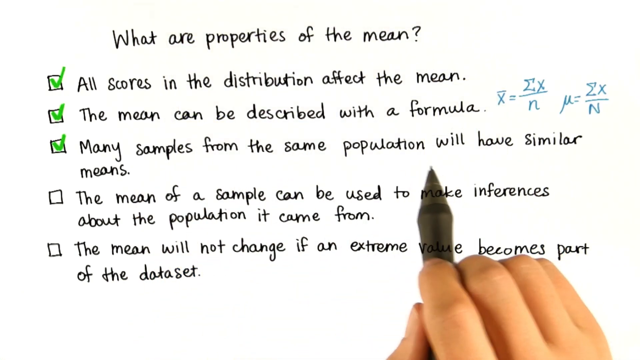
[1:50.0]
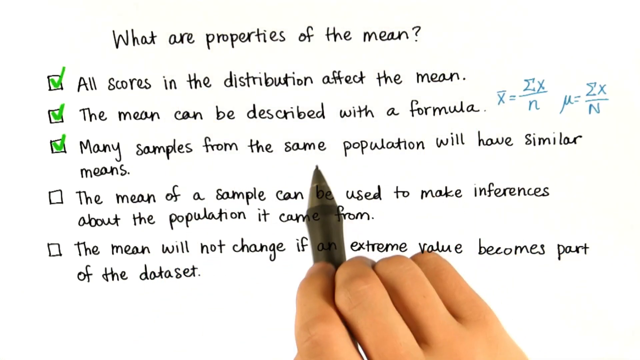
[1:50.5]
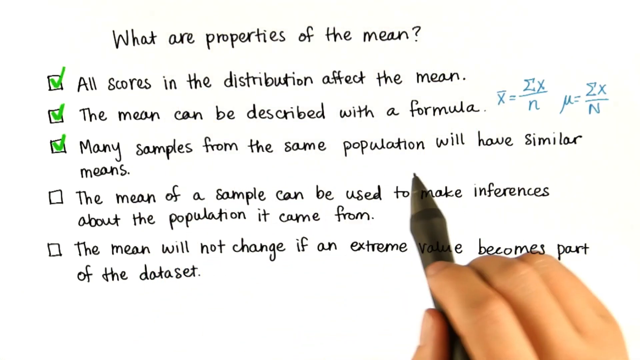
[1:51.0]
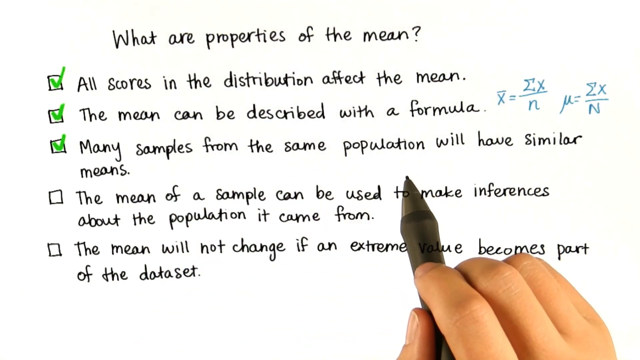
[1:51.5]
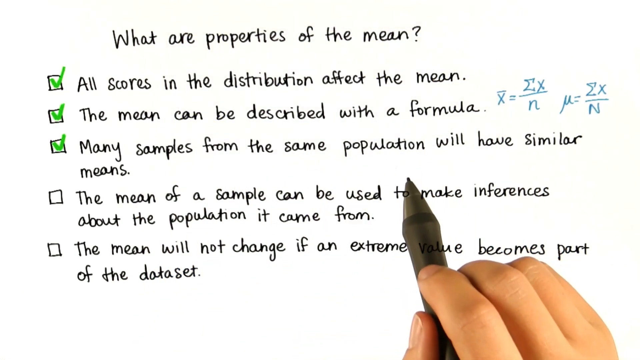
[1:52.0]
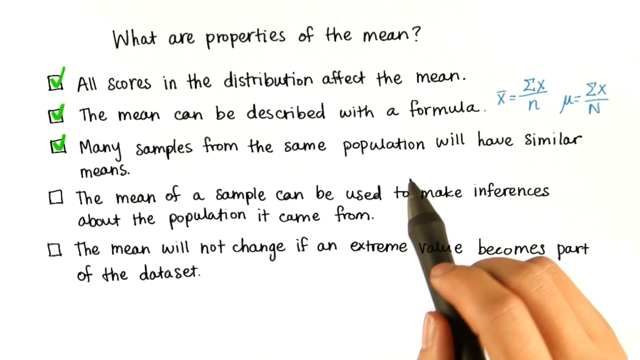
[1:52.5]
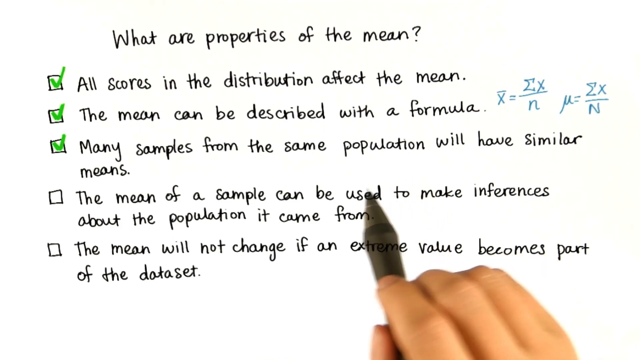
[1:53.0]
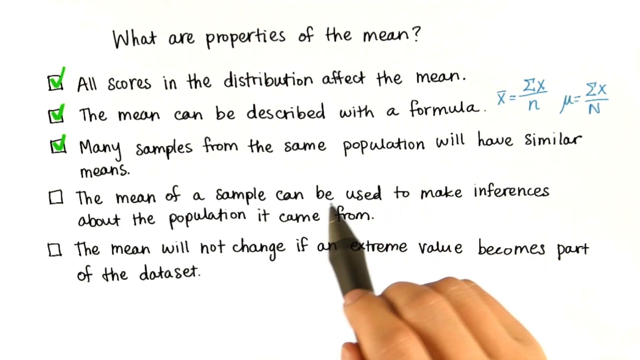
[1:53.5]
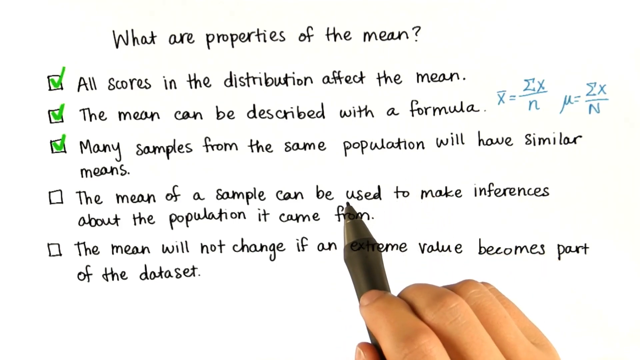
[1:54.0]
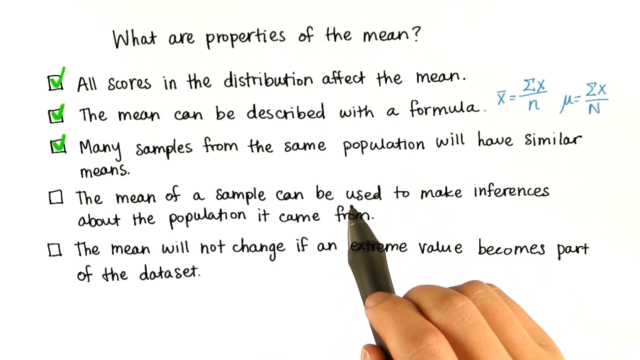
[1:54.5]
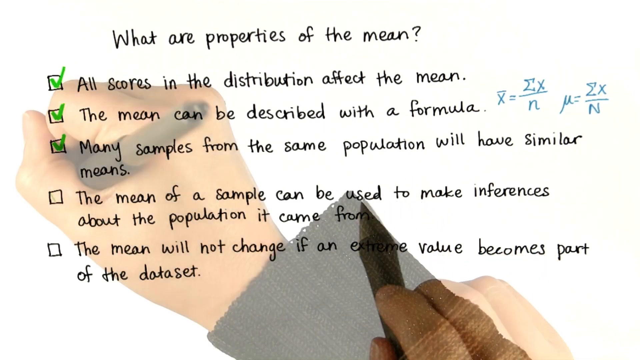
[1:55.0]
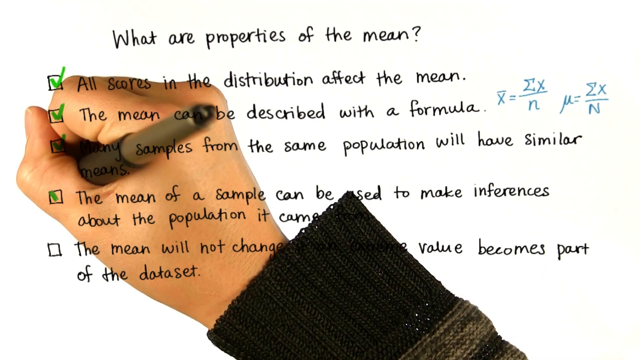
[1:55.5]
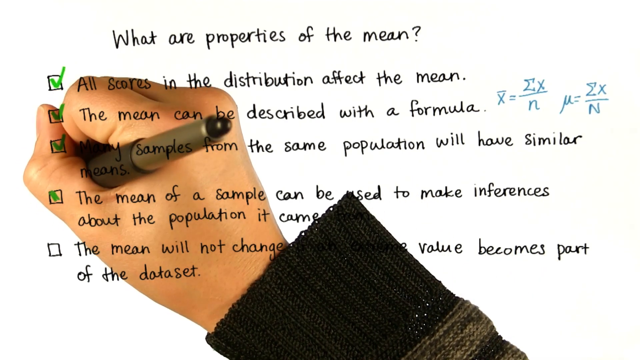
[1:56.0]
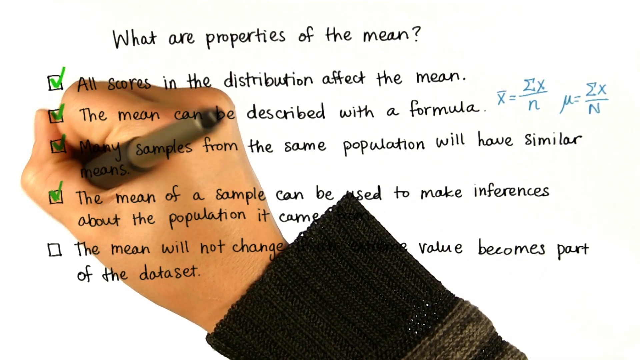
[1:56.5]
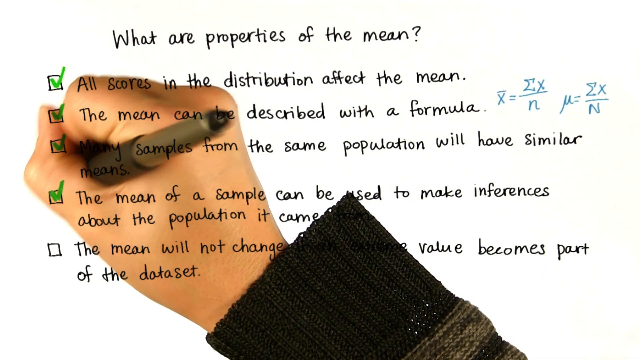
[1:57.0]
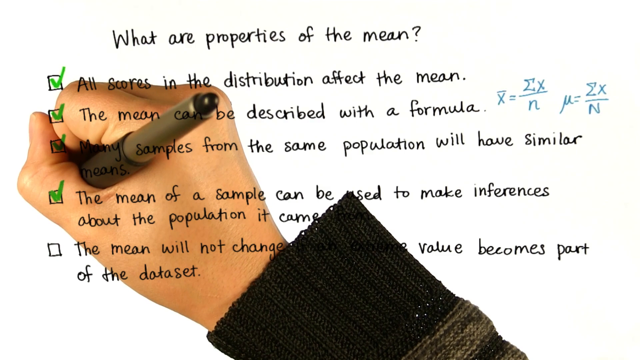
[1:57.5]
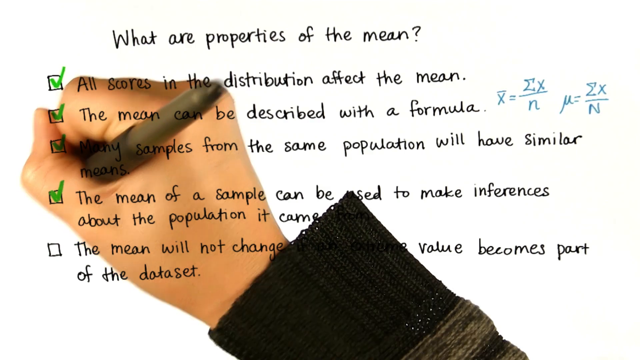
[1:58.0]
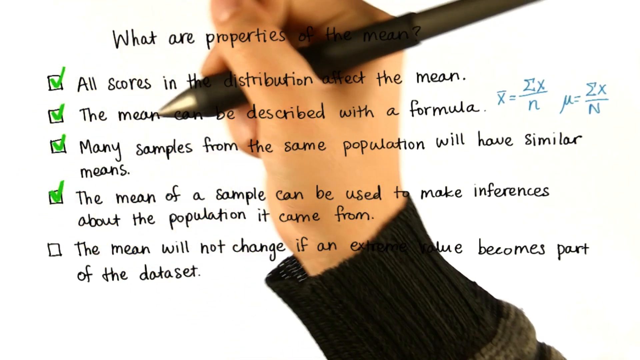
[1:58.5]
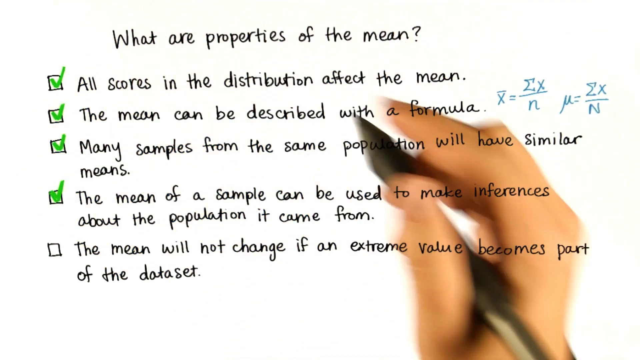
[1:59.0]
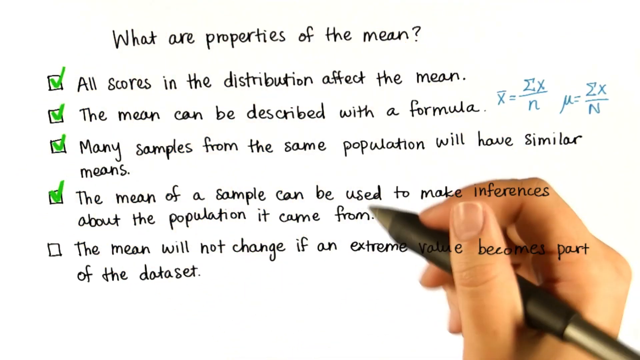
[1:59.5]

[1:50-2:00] A white screen shows text and bullet points under the title "What are the Properties of the Mean?", with five bullet points below it. Each bullet point is a line of text with a square checkbox. The top three are already checked with a green checkmark, and there are two equations to the side. The person moves his pen to the fourth point, which says "the mean of a sample can be used to make inferences about the population it came from". He then fills in the fourth box with a big green checkmark and moves his pen around.